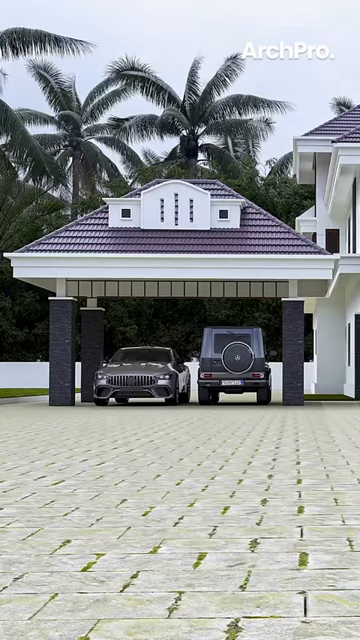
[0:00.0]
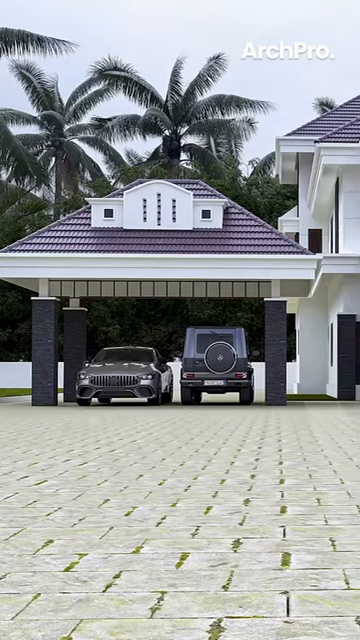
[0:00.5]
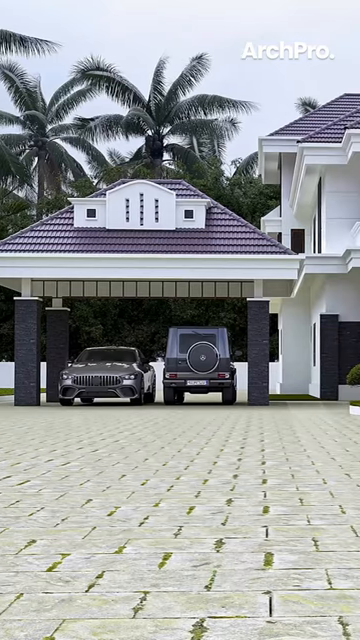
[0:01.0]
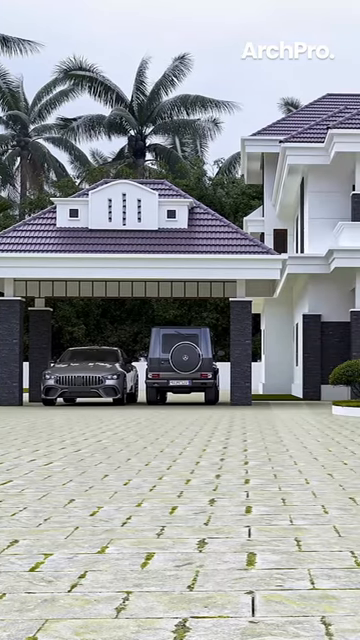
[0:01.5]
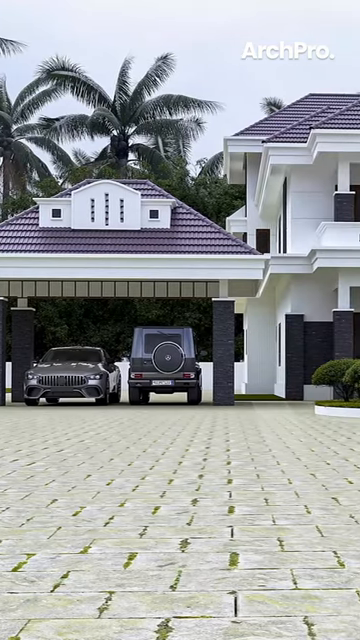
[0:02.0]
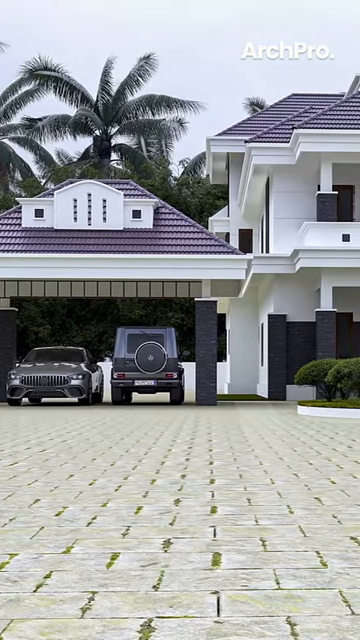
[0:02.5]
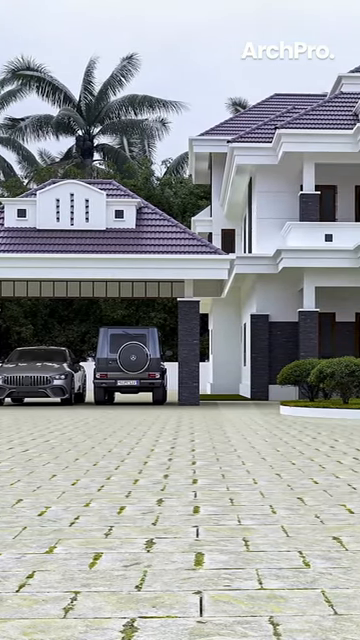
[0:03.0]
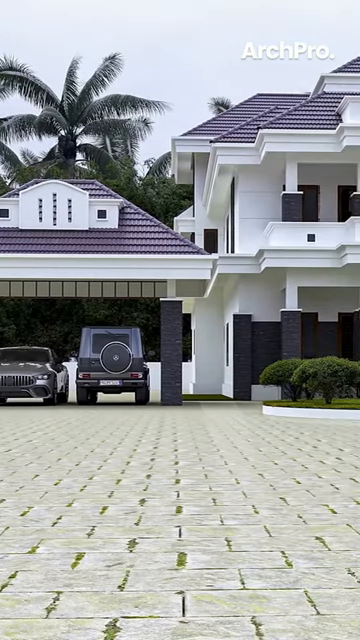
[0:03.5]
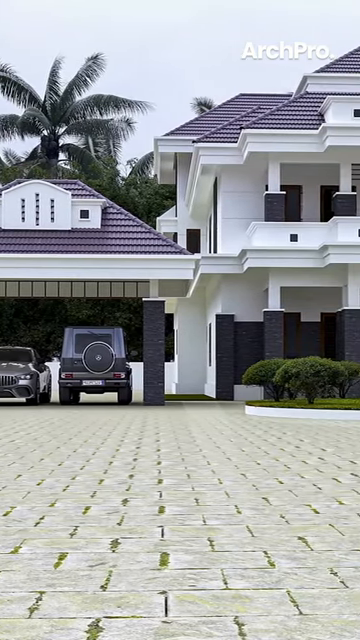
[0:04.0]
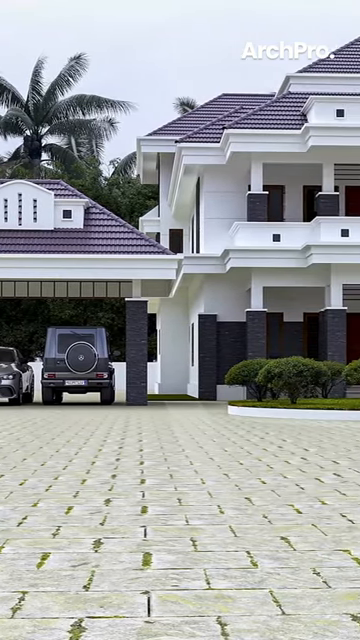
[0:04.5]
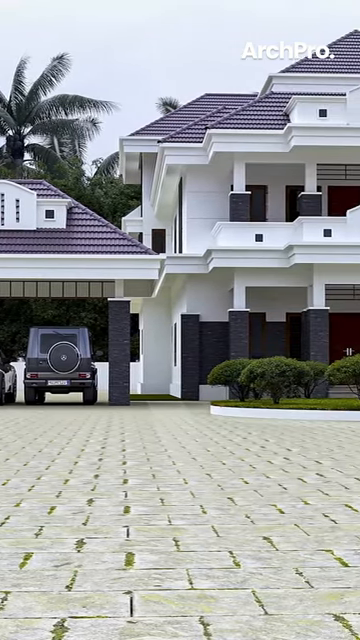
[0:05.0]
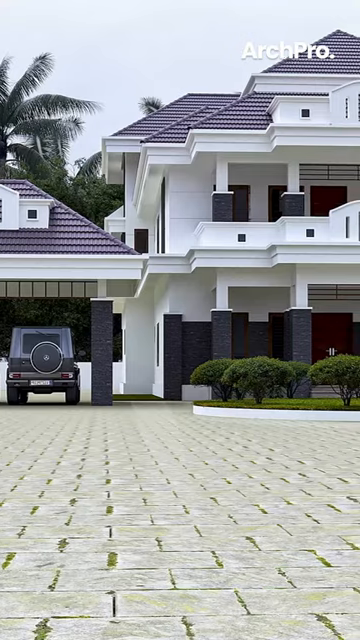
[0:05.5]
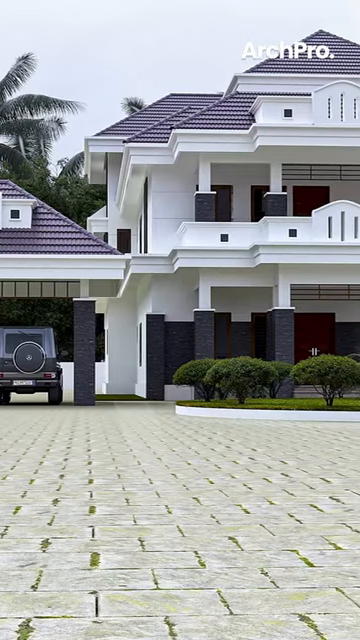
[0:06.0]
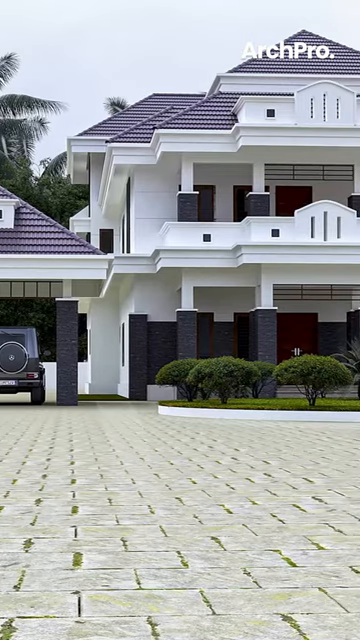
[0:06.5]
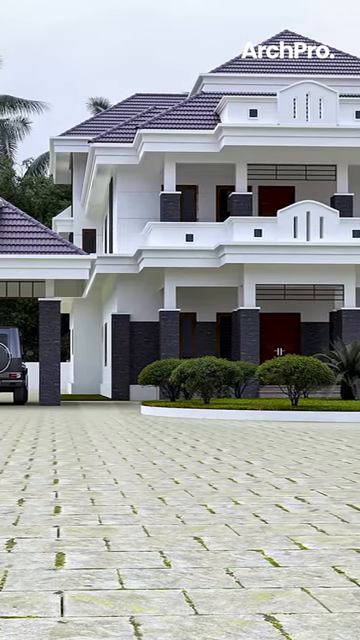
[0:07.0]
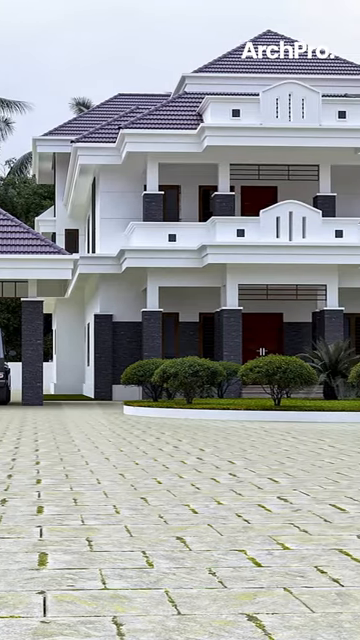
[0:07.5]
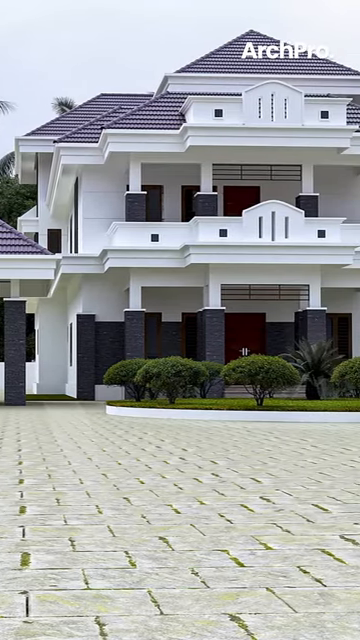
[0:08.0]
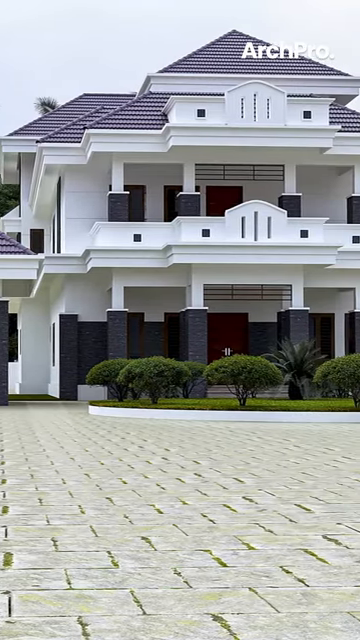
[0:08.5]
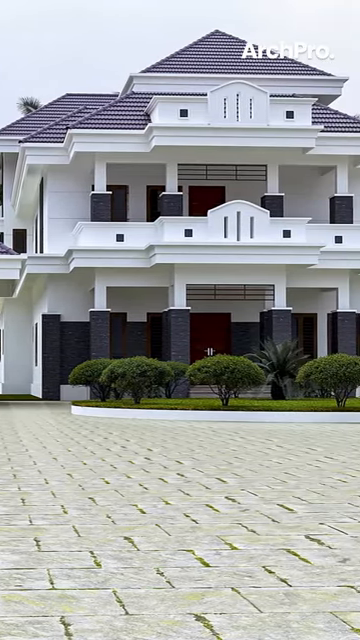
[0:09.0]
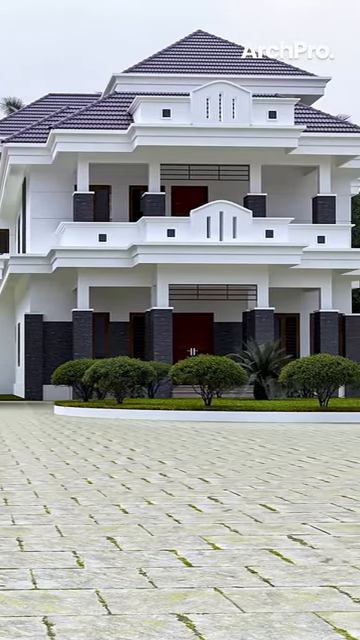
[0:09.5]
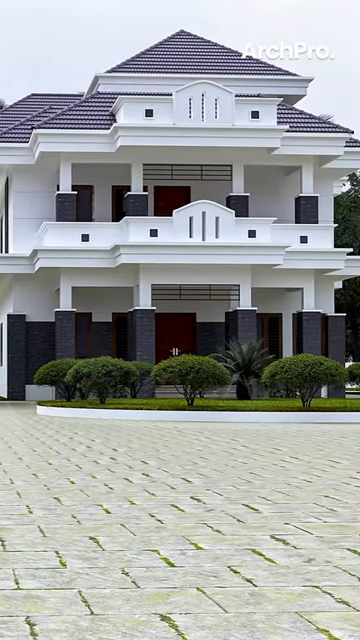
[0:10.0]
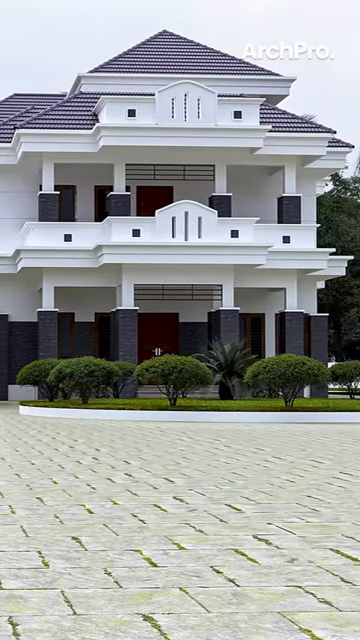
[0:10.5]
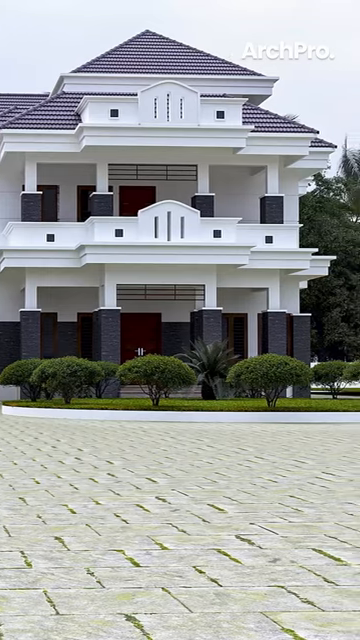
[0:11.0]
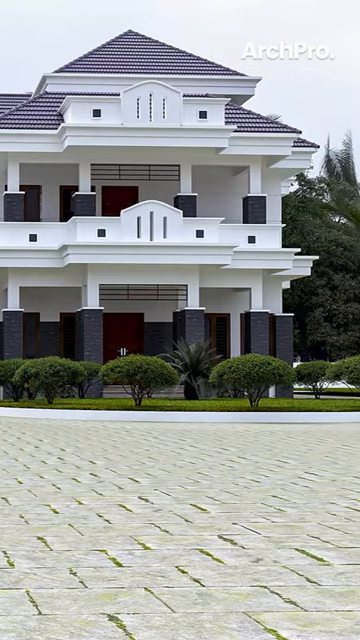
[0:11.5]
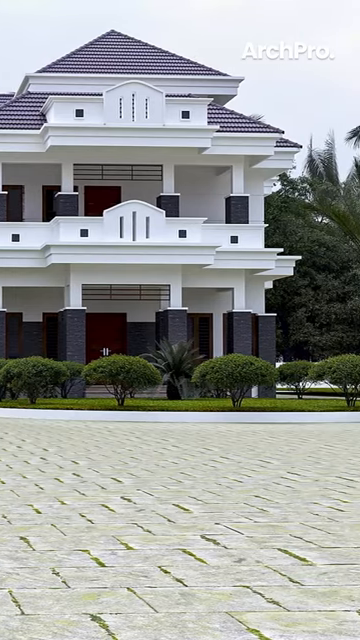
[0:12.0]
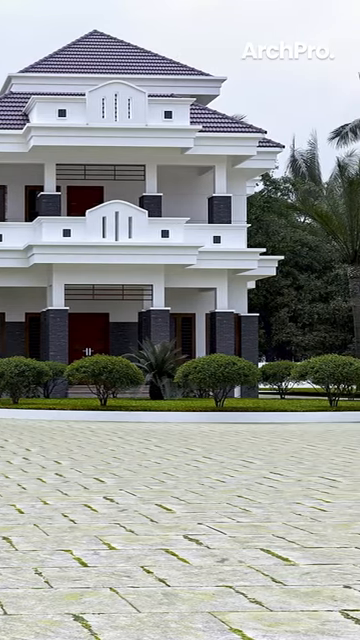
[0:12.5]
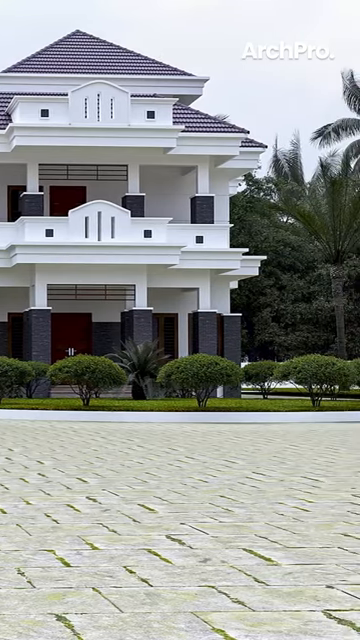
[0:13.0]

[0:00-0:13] A large, well-kept house appears, with a carport in view first. The driveway is made of interwoven bricks in what is sort of an almost cross-herringbone pattern. The house is white with a gray roof and gray pillars, and there is green landscaping in the front. Two vehicles are parked in the carport, one of which looks like a Mercedes SUV.